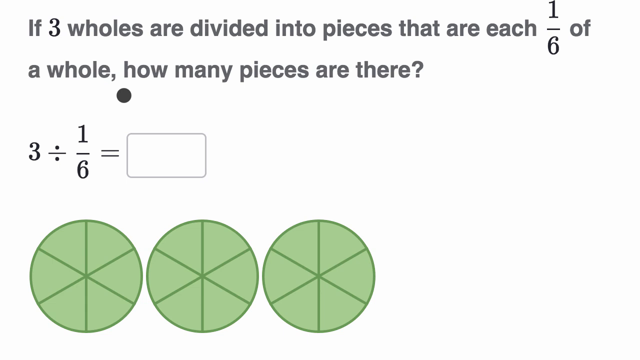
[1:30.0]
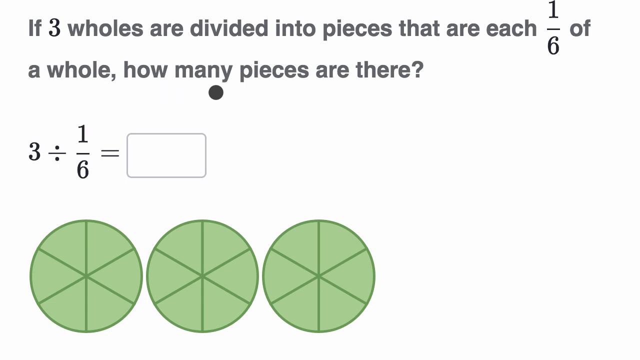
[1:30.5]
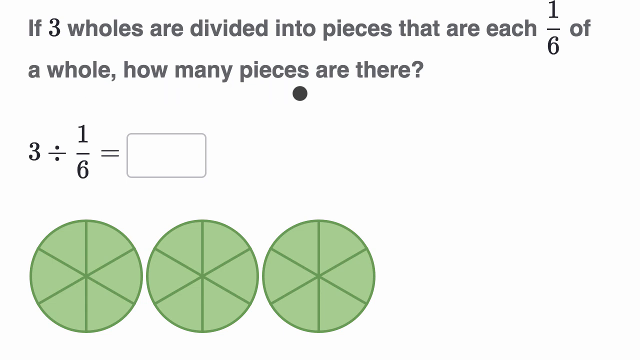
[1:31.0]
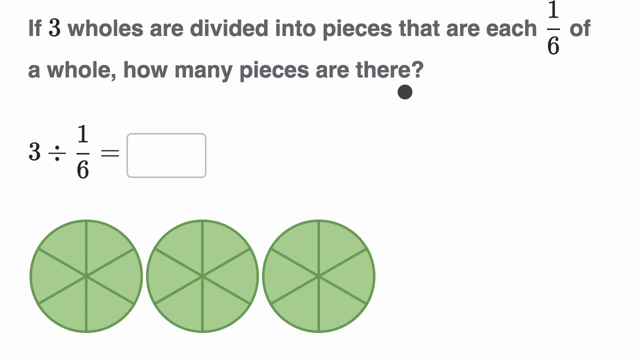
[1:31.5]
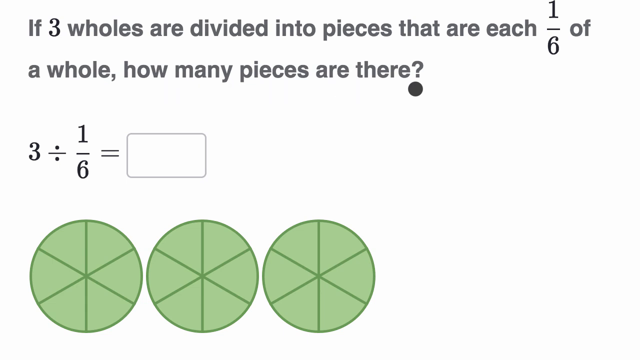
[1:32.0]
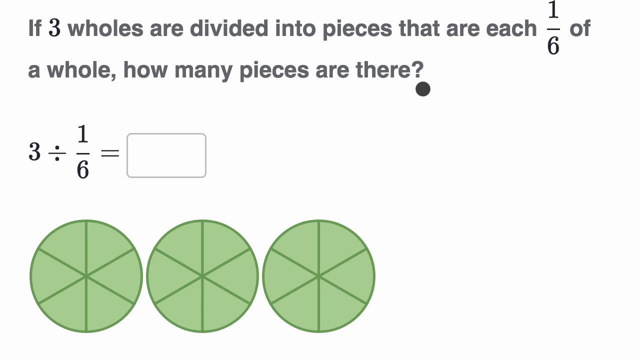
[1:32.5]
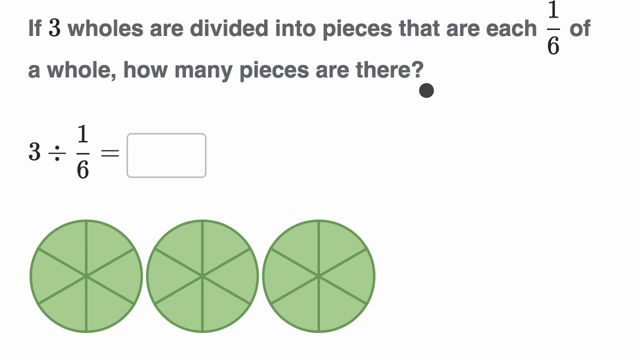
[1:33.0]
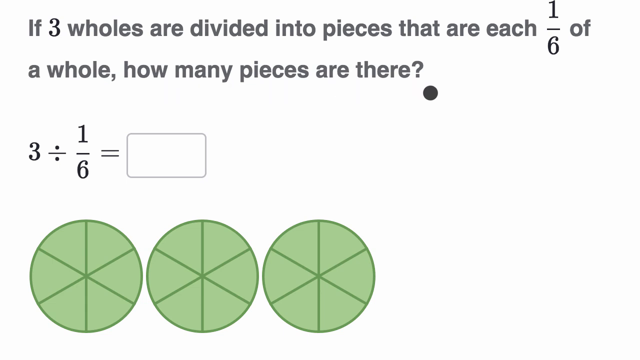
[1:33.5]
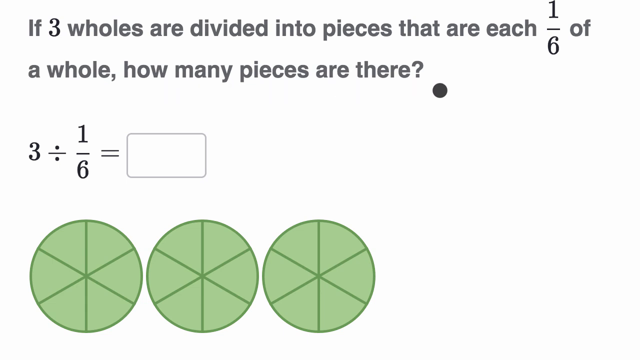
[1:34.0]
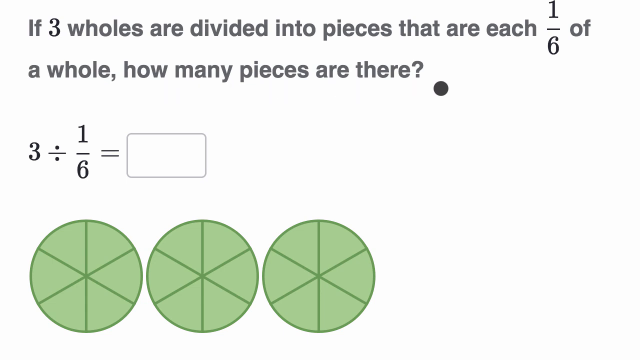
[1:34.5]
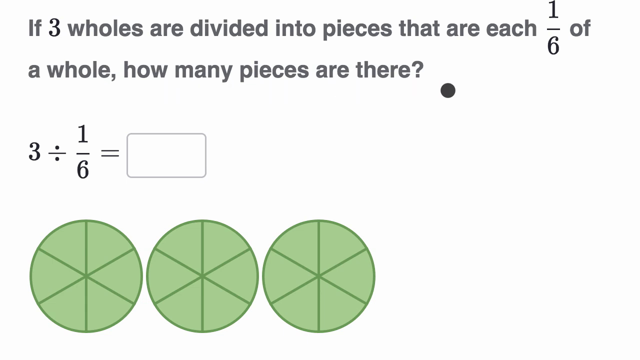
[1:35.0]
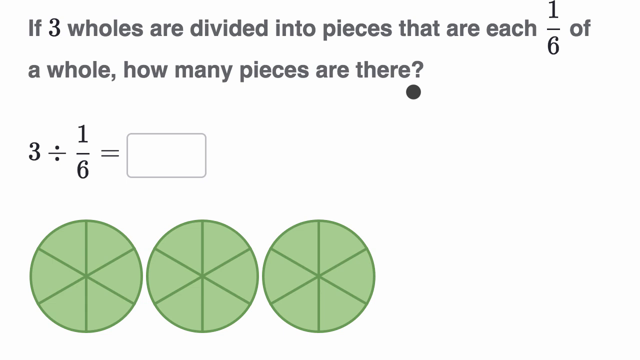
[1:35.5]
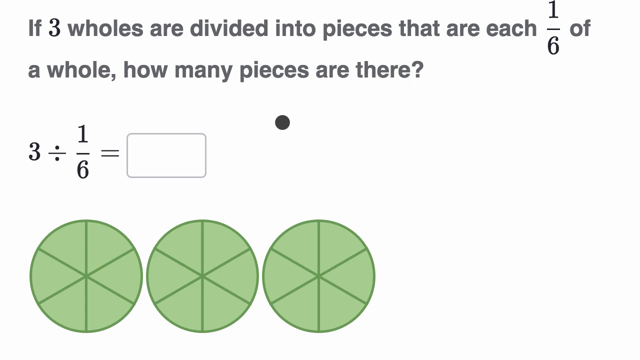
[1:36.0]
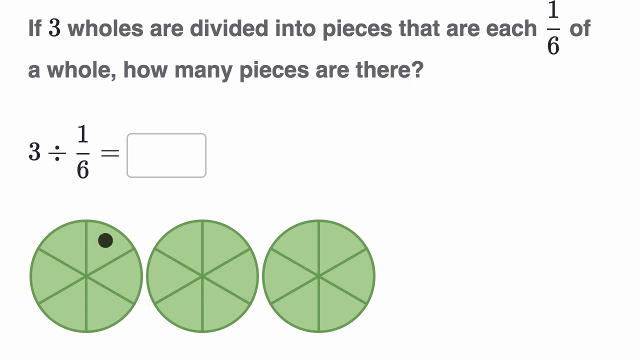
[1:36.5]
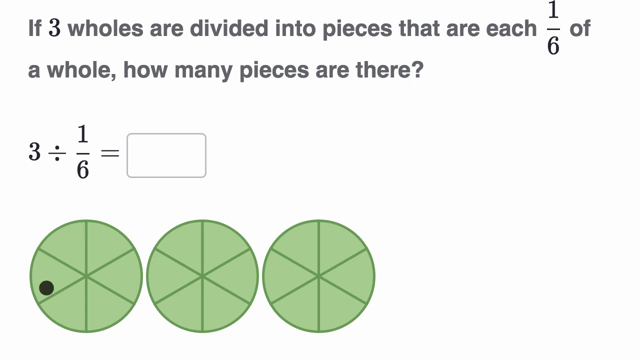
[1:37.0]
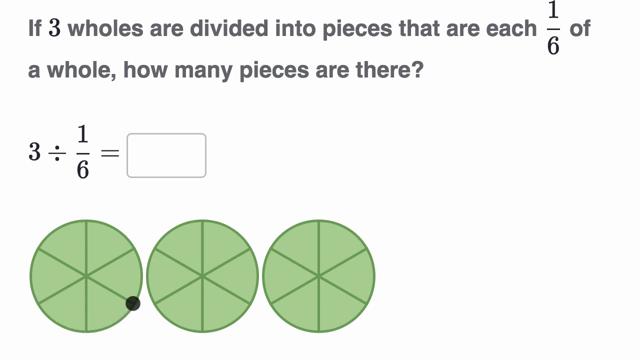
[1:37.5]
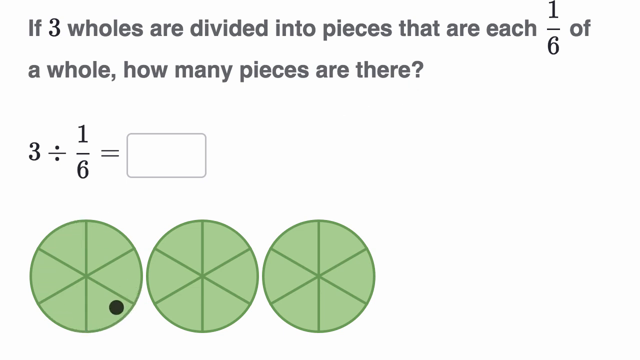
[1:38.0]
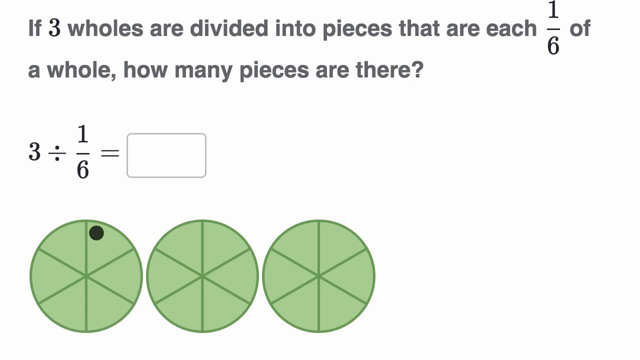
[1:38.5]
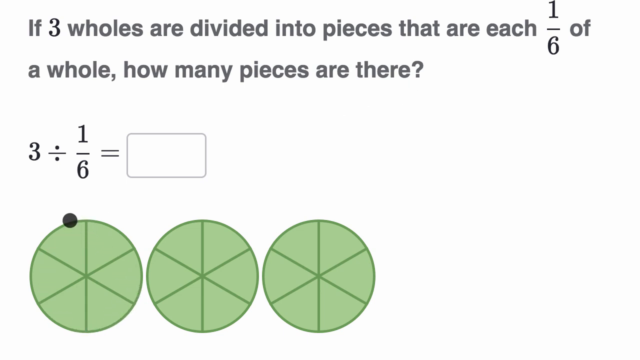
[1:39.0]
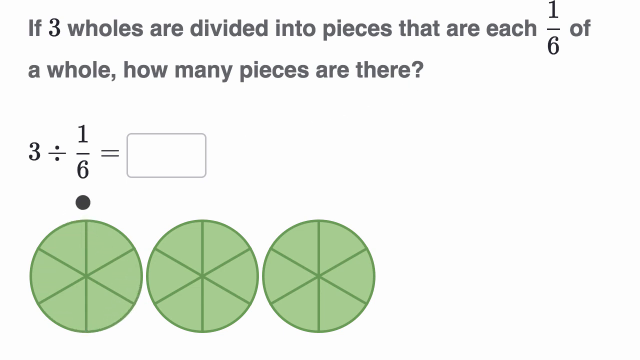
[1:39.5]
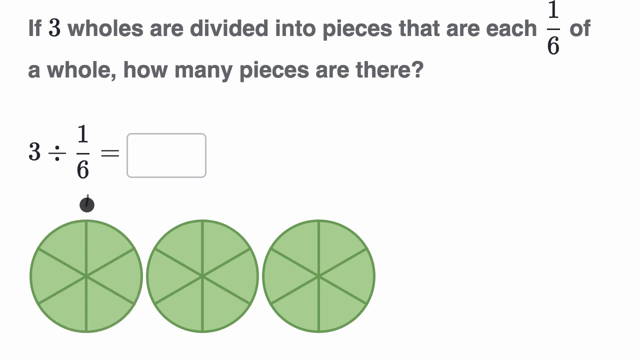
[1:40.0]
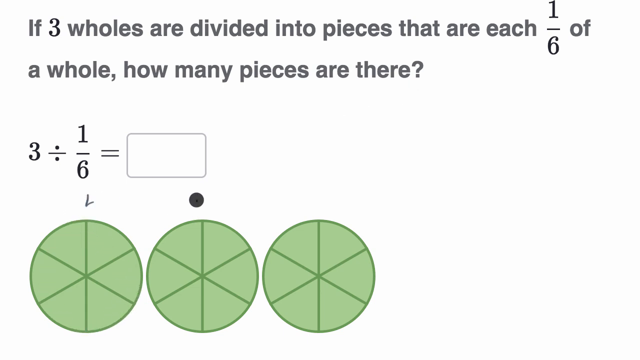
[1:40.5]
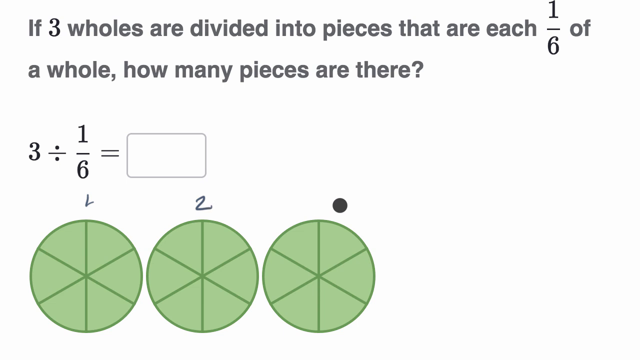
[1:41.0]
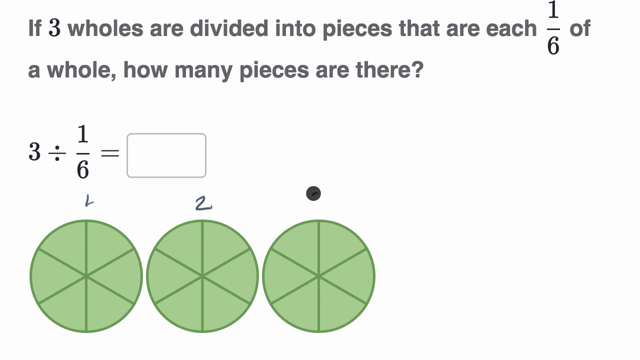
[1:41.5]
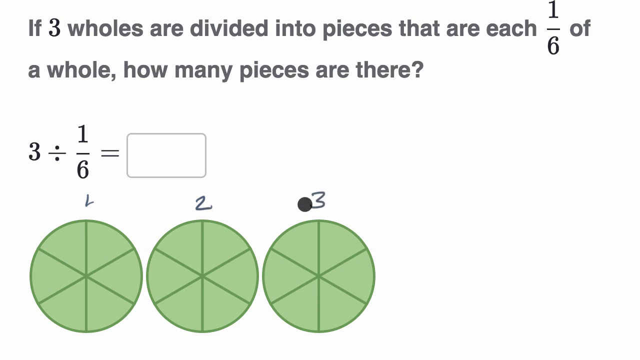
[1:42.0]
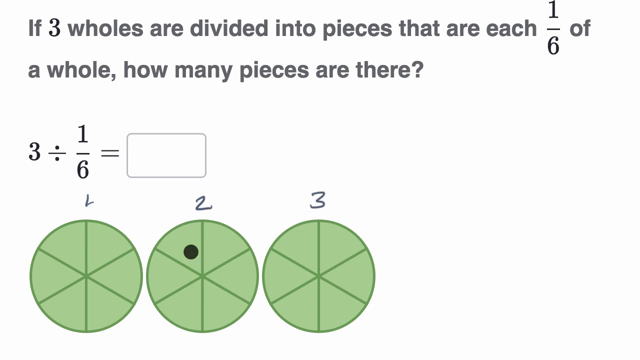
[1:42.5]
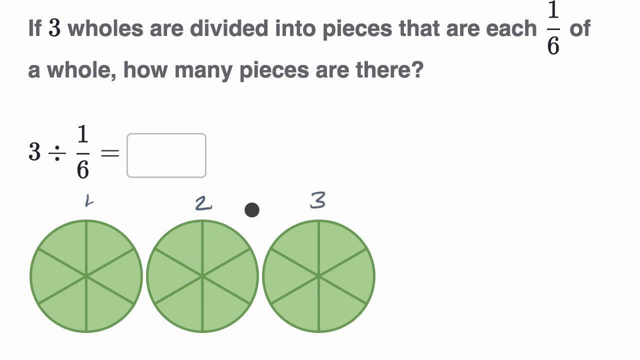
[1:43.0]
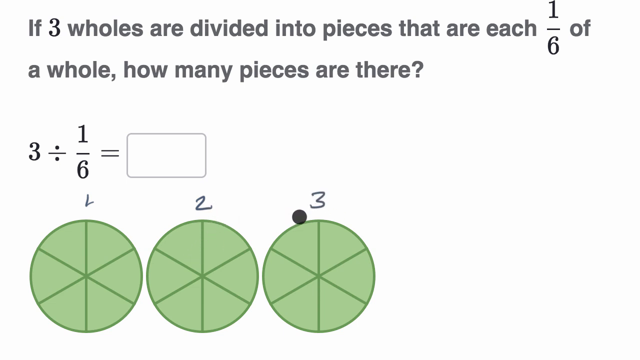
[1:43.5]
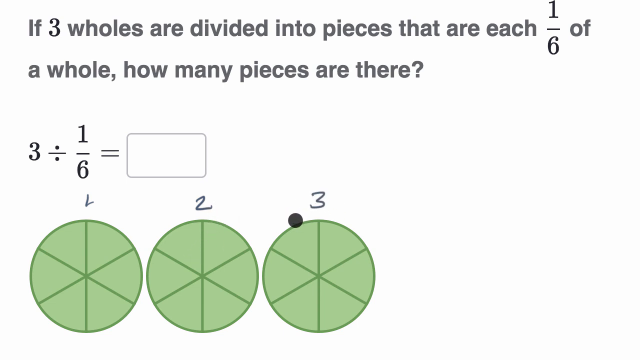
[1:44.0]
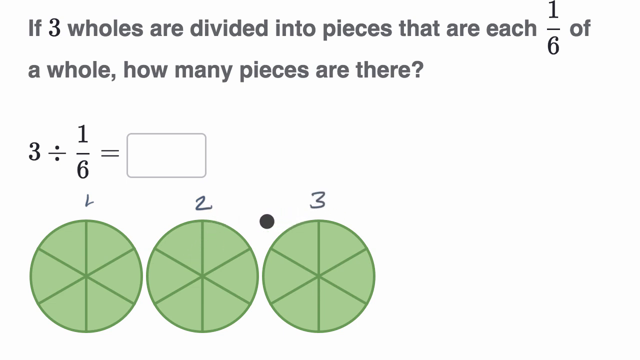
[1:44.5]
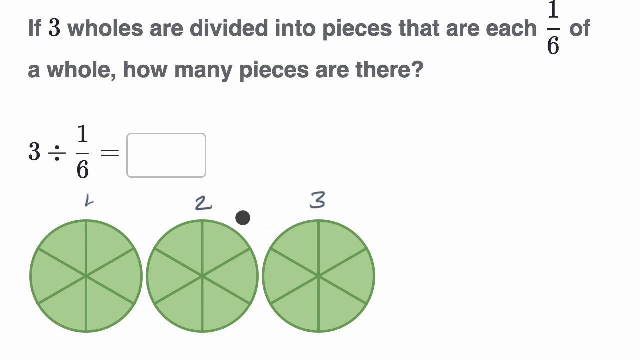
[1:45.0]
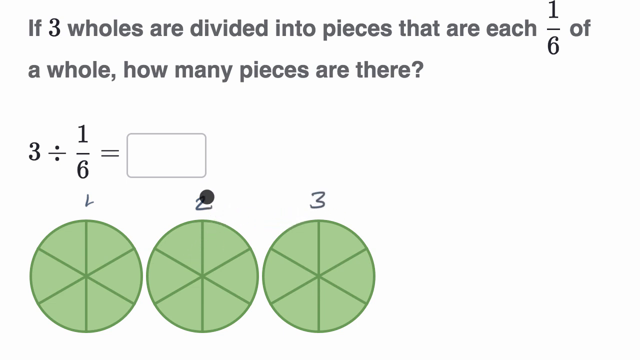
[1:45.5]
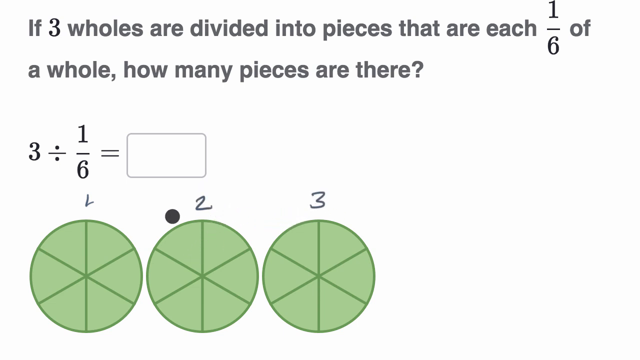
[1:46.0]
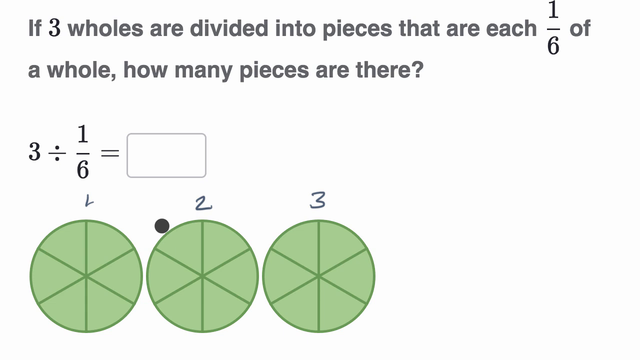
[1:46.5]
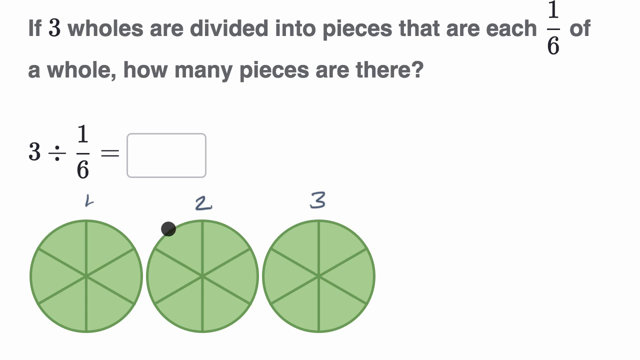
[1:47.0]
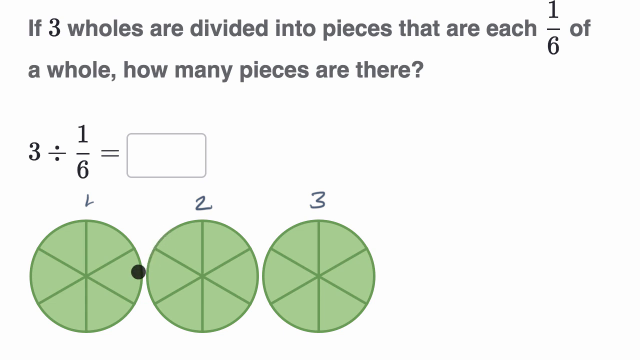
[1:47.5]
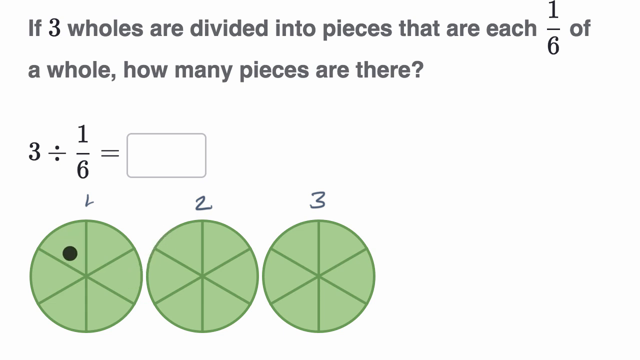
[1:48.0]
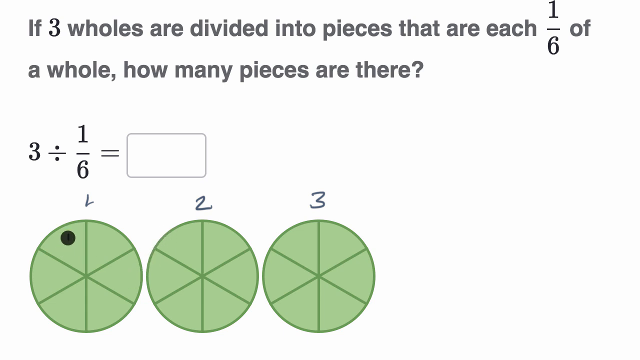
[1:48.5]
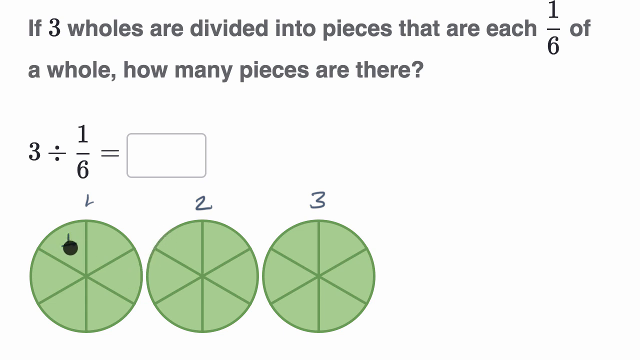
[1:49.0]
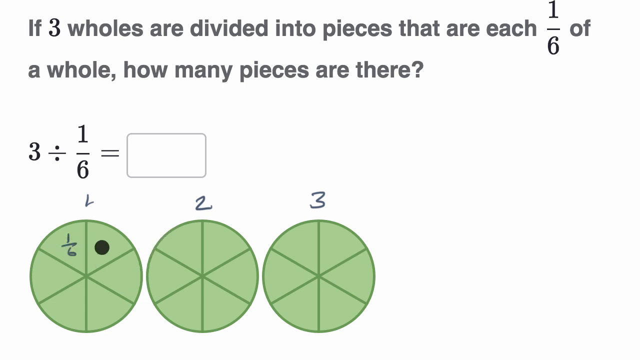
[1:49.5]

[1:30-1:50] On a white background, gray text is at the top with a gray cursor beneath it. Below, on the left, is an equation with an empty text entry box to its right, and in the lower left corner are three green circles divided into six pieces each. The cursor traces beneath the second line of grey text to the right and hovers under the text for a moment. It is dragged down and to the left over the leftmost green circle, circles around the bottom and then the top of the circle, and draws a 1 above it. Dragged right, it draws a 2 over the middle green circle and a 3 over the rightmost green circle. The cursor hovers over the 2 above the middle circle, then moves down and to the left to the upper left portion of the leftmost green circle and draws 1/6 there.